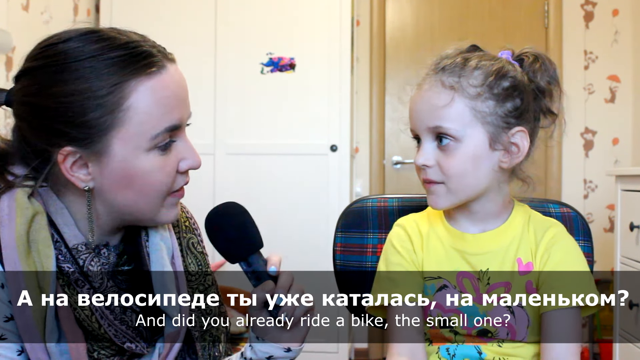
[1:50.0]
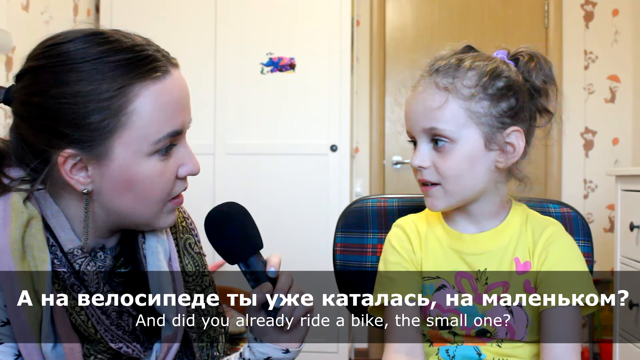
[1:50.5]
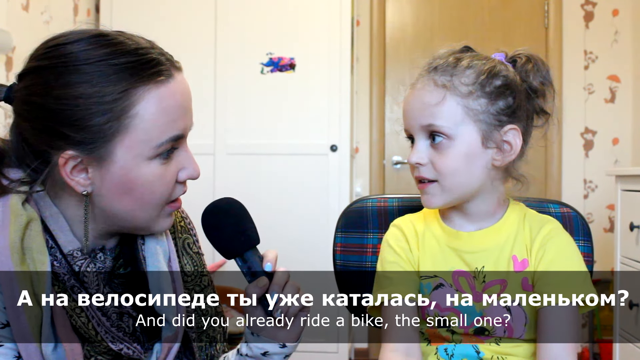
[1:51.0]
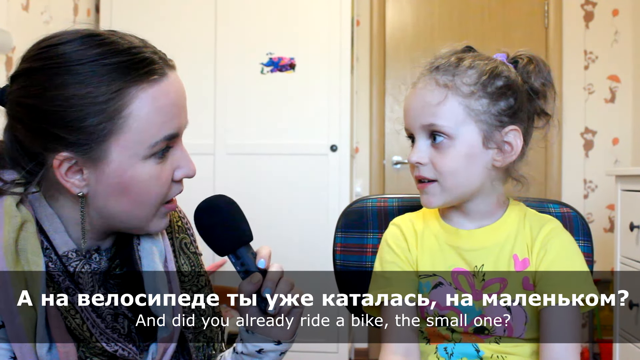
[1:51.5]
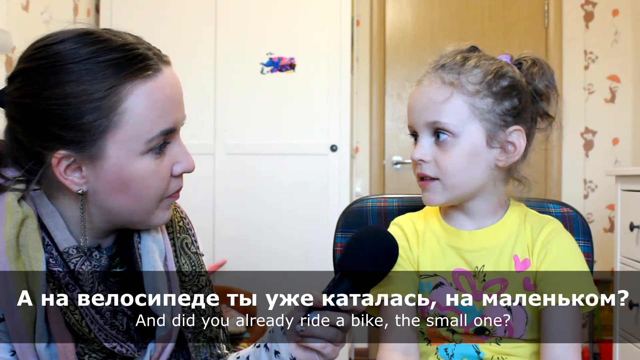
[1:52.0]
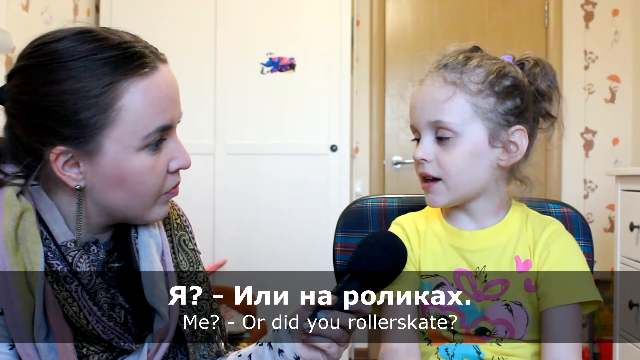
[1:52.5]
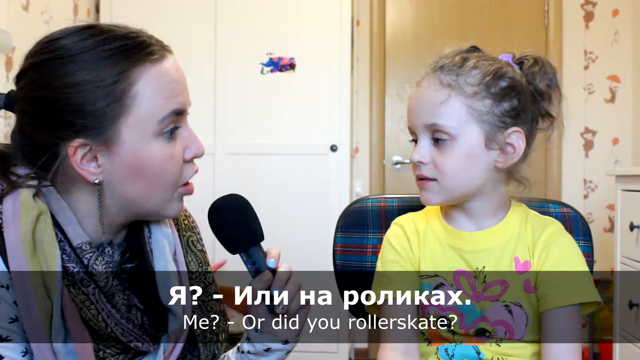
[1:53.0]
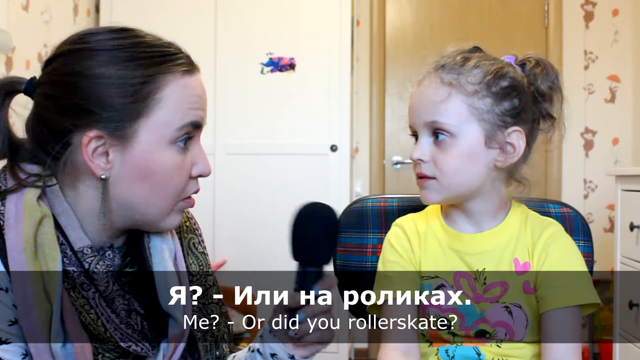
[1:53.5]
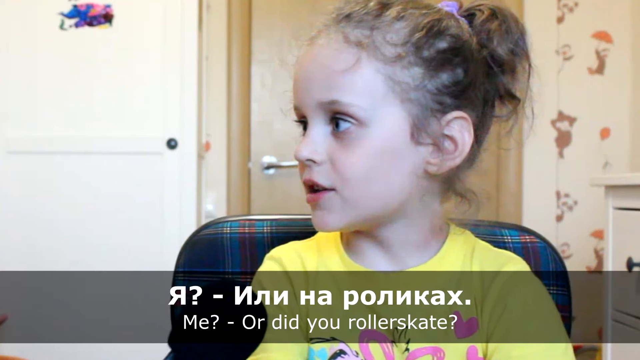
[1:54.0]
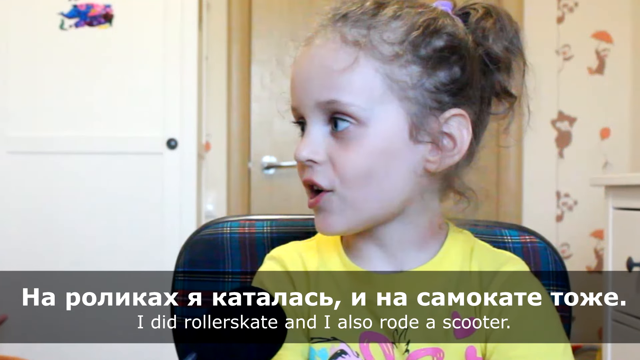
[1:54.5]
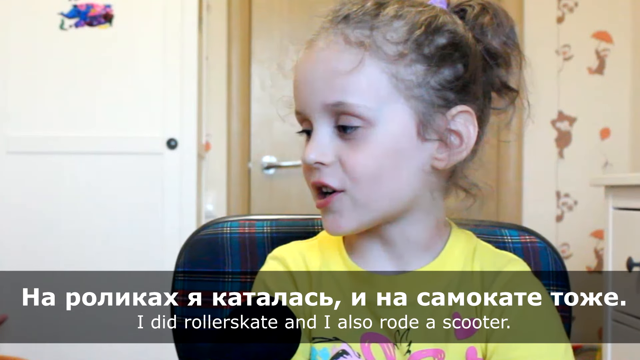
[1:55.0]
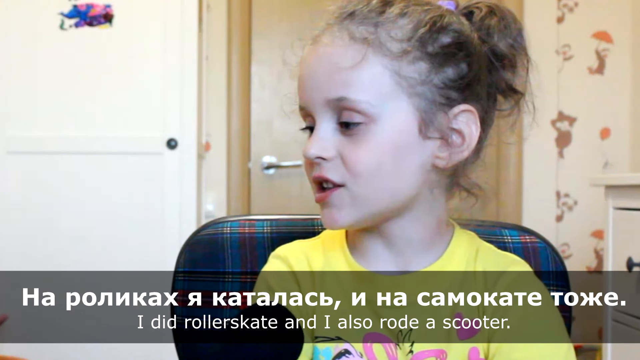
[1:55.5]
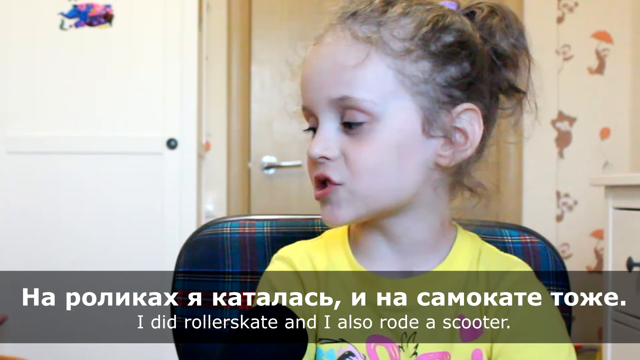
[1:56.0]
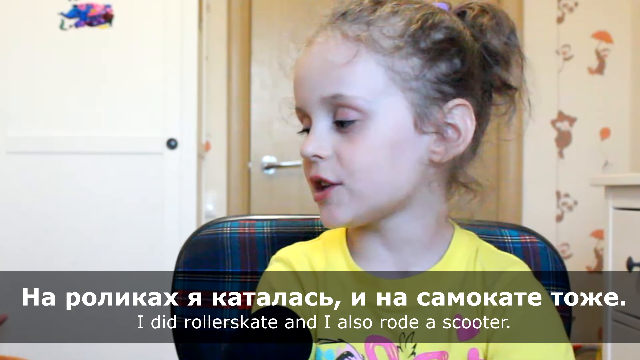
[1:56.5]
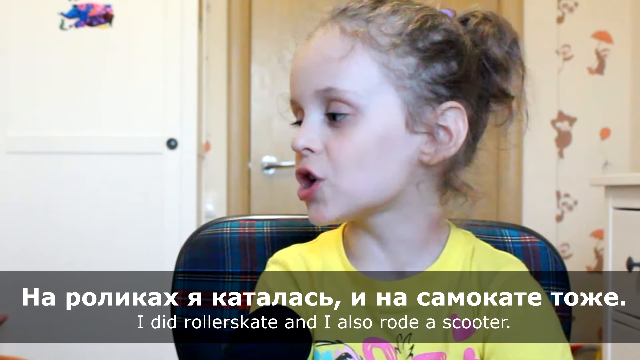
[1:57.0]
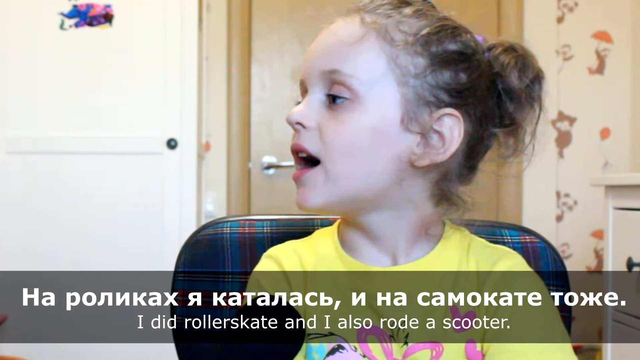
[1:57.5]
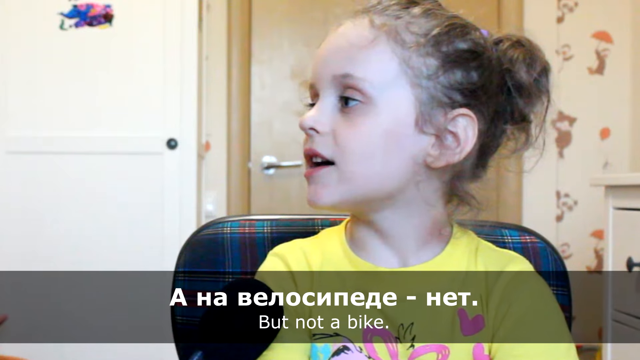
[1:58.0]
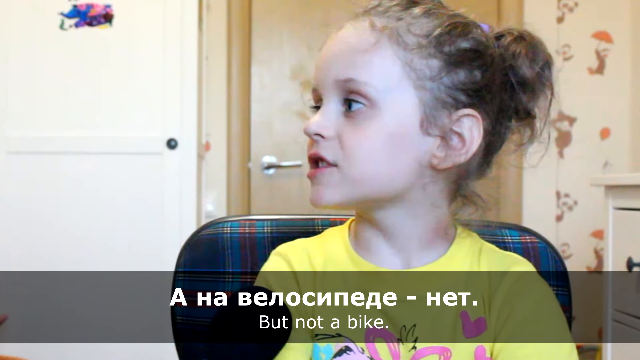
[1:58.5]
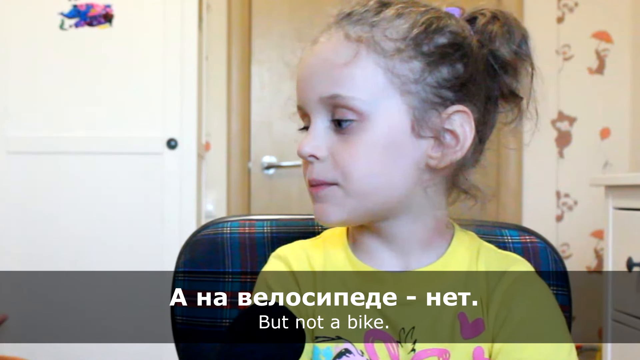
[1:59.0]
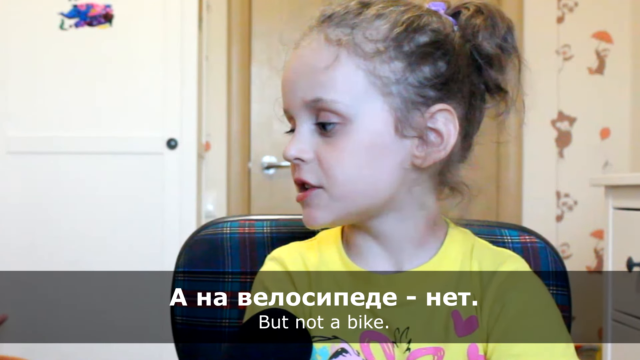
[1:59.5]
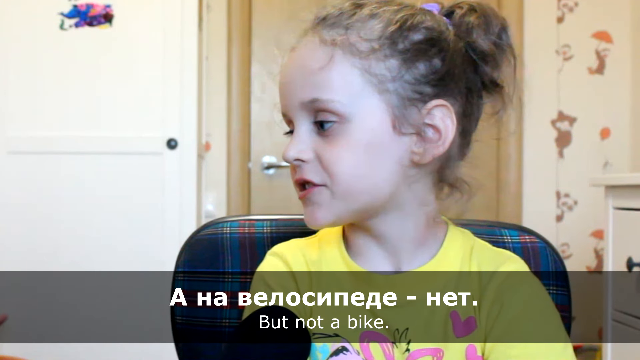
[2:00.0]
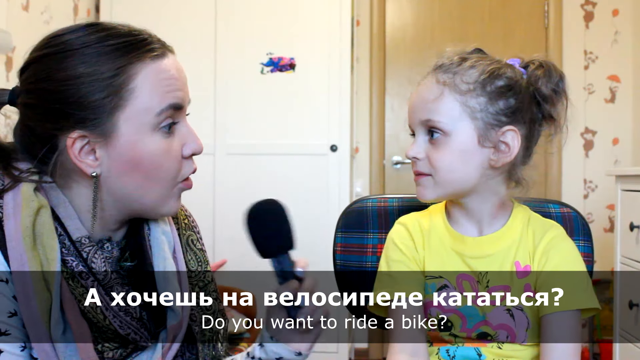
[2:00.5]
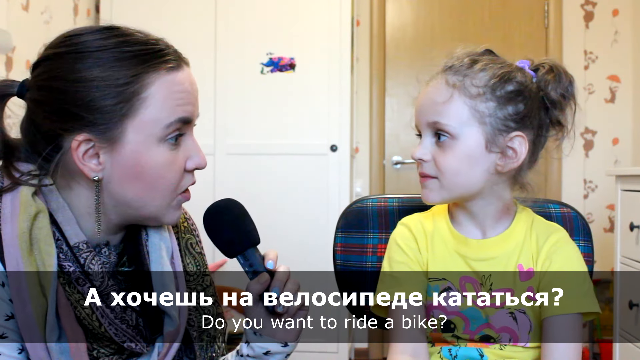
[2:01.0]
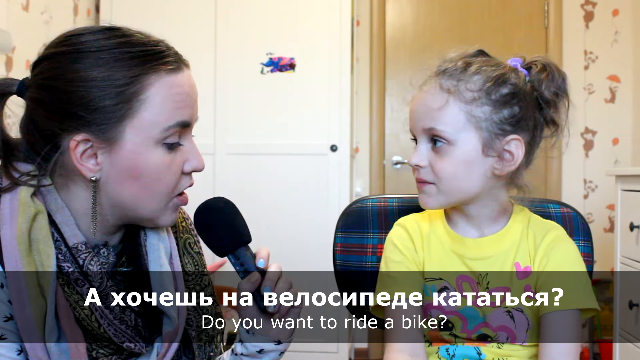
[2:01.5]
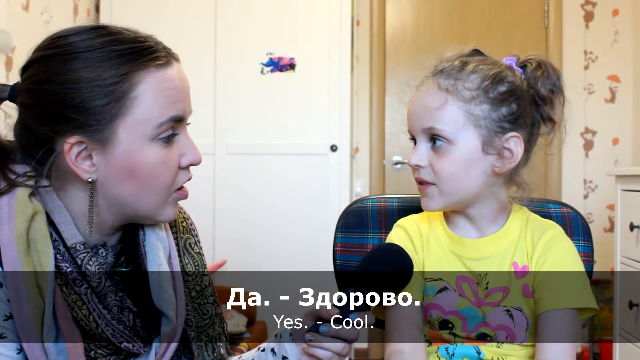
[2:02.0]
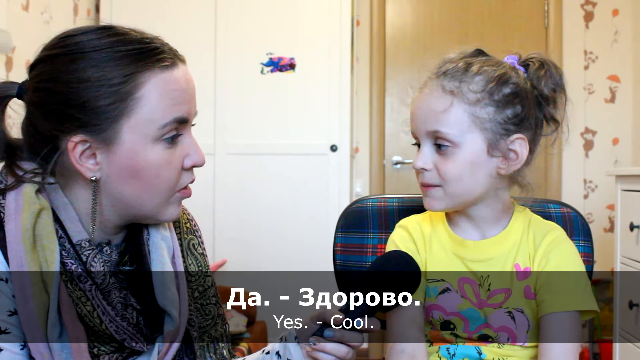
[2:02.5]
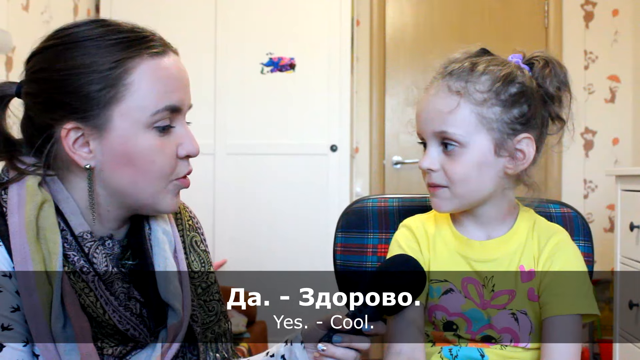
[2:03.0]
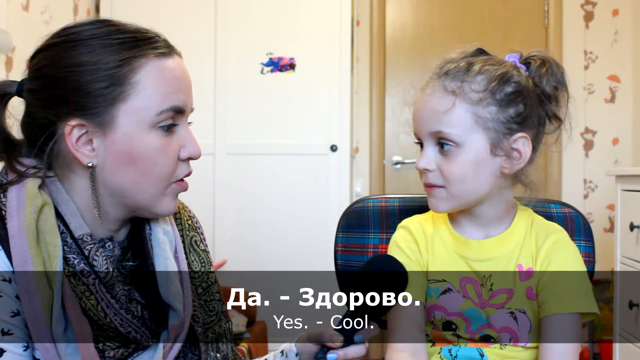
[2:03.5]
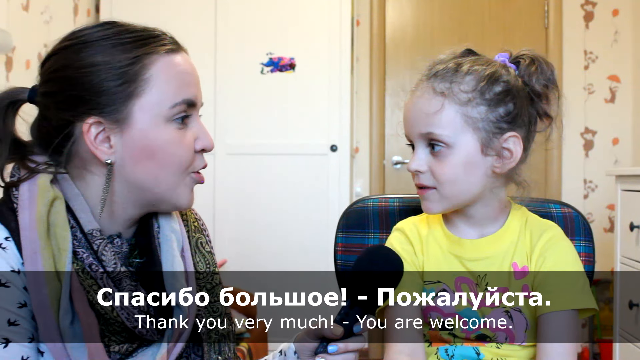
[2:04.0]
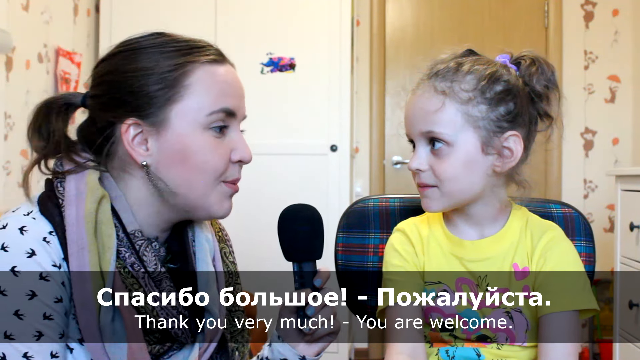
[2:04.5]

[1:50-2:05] The woman asks whether the girl wants to ride a bike; the subtitle reads "yes - cool" with a hyphen, so apparently the girl says yes and the woman says cool. The woman then asks whether she already rides a bike or roller skates, and the girl says she did roller skate and also rode a scooter, but not a bike. The video cuts back and forth between the two, focusing on just the girl when she answers about roller skating, scooters and bikes. At the end the woman says thank you, and the subtitles show the girl saying you are welcome, though the shot apparently ends before she actually says it.